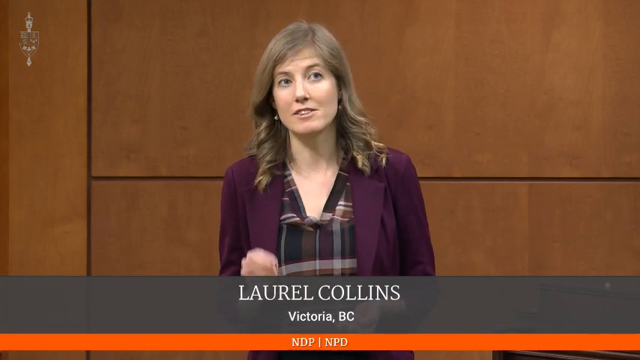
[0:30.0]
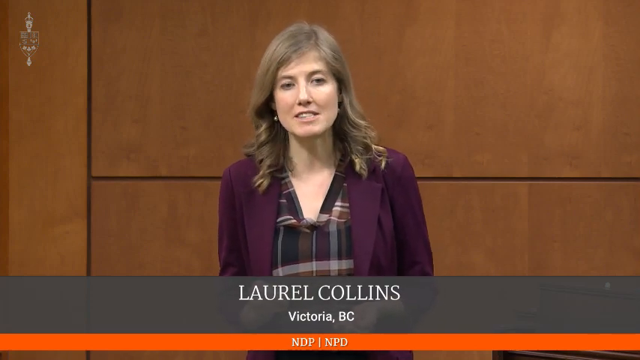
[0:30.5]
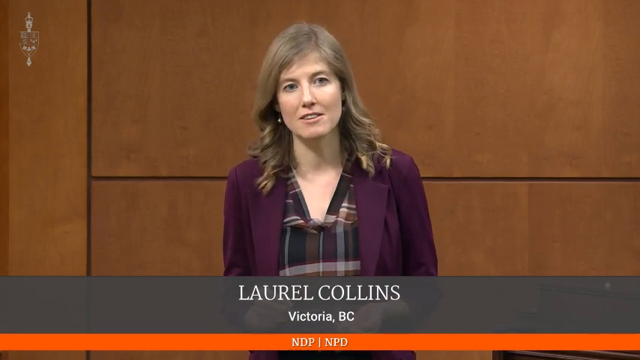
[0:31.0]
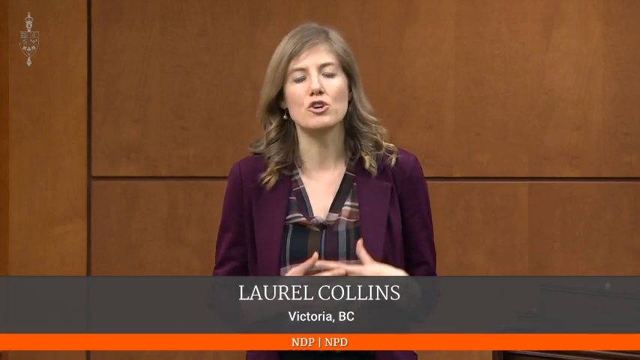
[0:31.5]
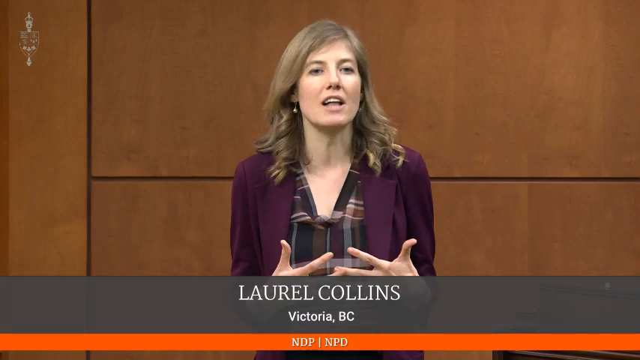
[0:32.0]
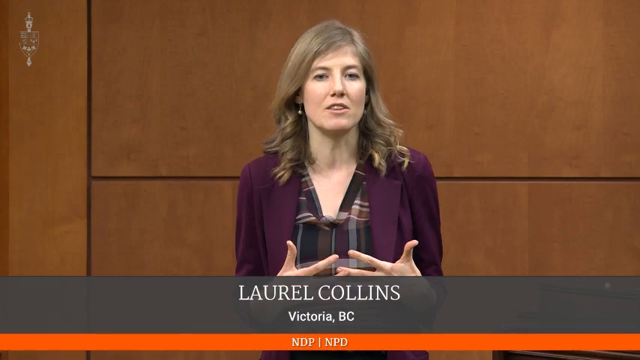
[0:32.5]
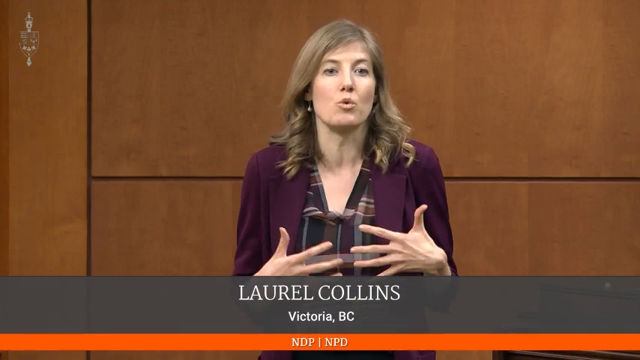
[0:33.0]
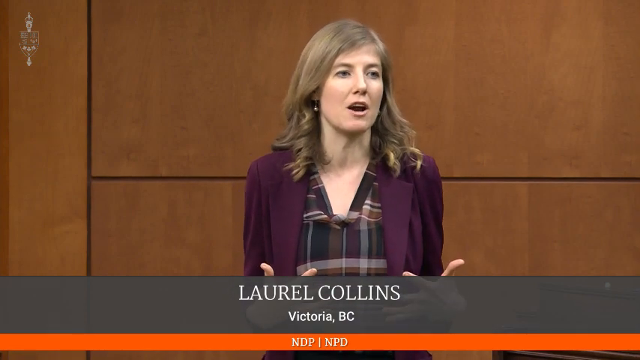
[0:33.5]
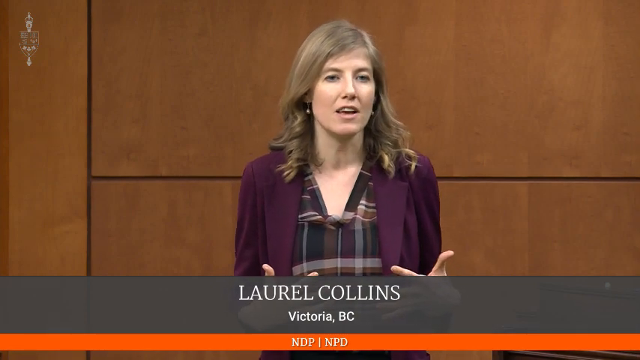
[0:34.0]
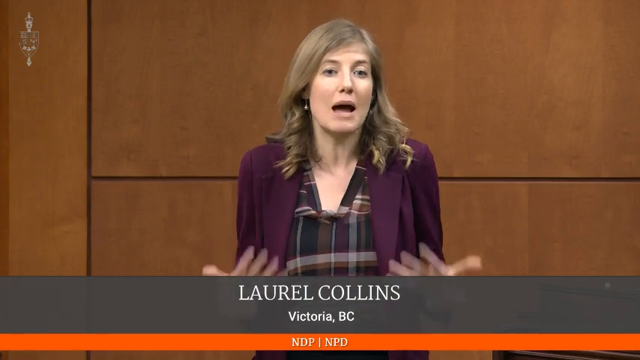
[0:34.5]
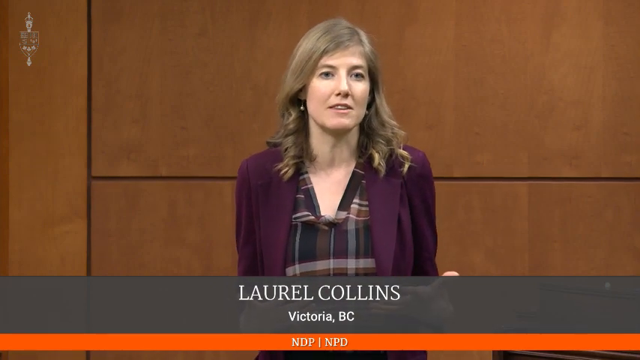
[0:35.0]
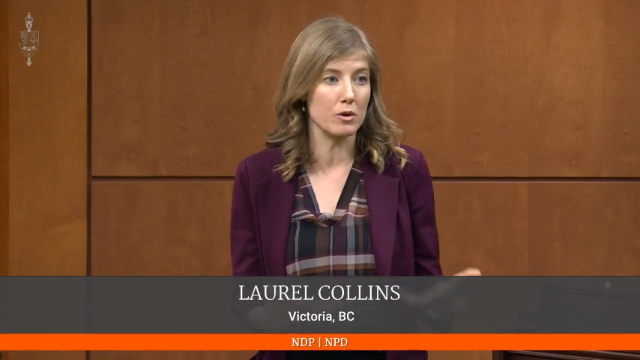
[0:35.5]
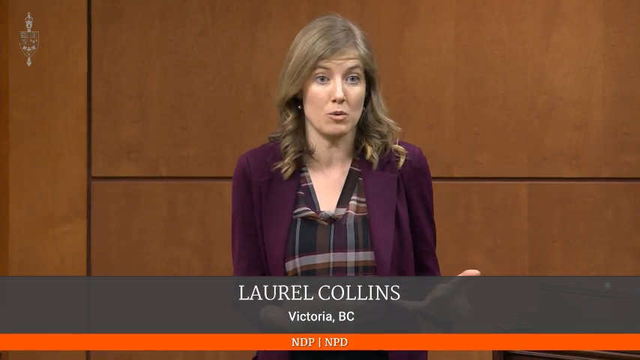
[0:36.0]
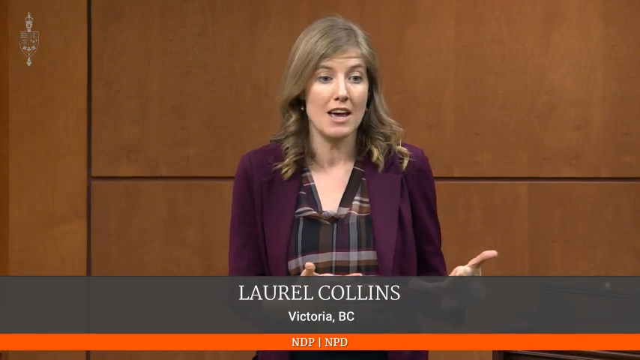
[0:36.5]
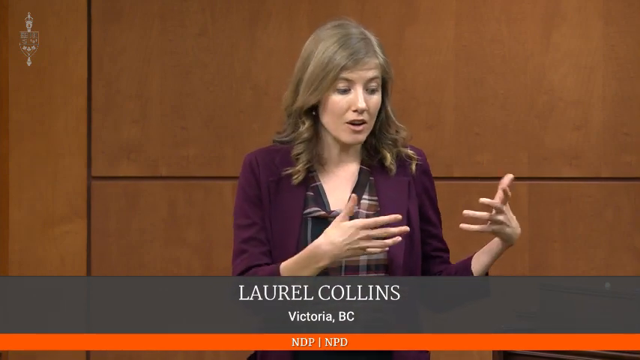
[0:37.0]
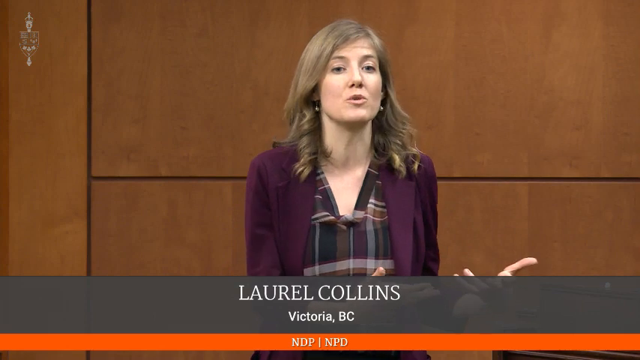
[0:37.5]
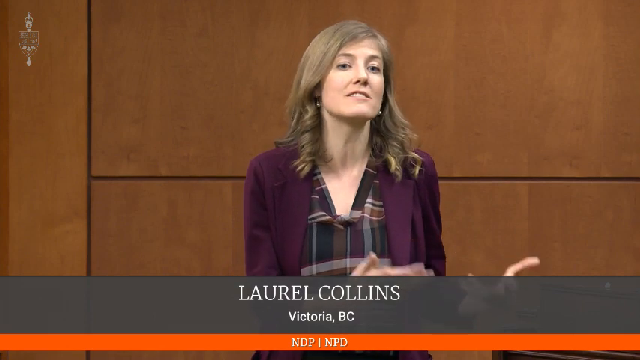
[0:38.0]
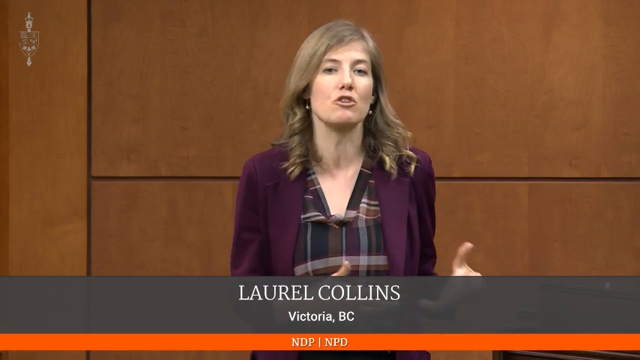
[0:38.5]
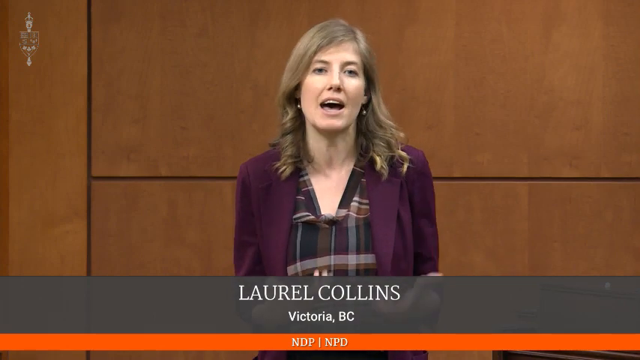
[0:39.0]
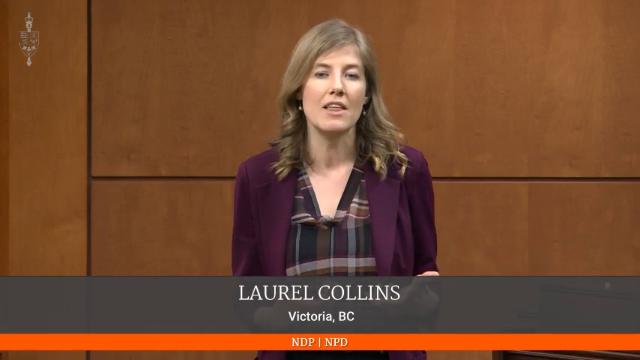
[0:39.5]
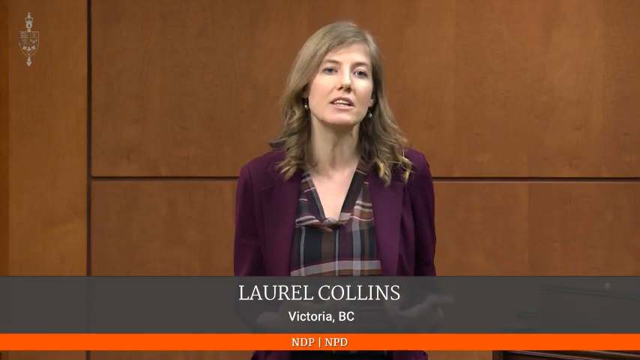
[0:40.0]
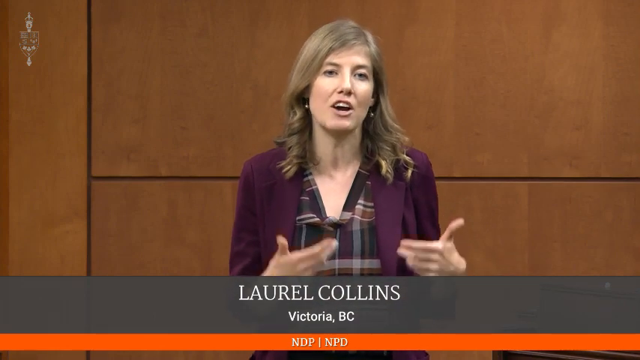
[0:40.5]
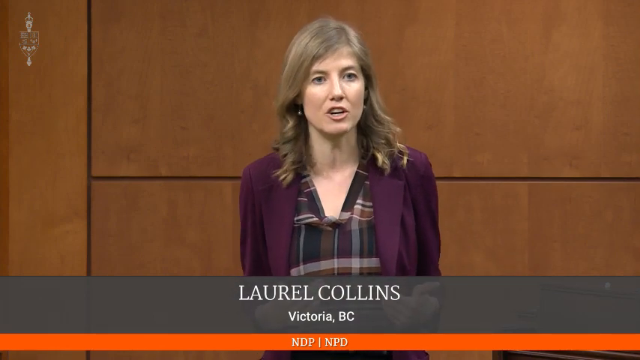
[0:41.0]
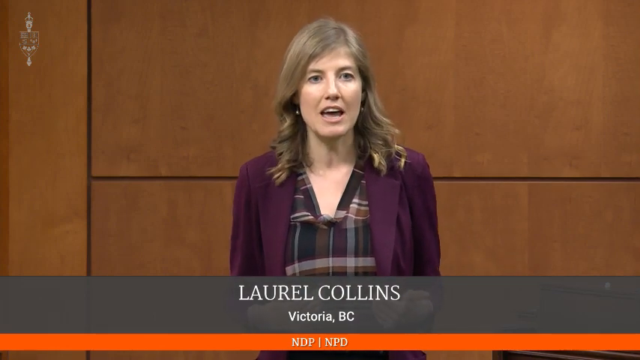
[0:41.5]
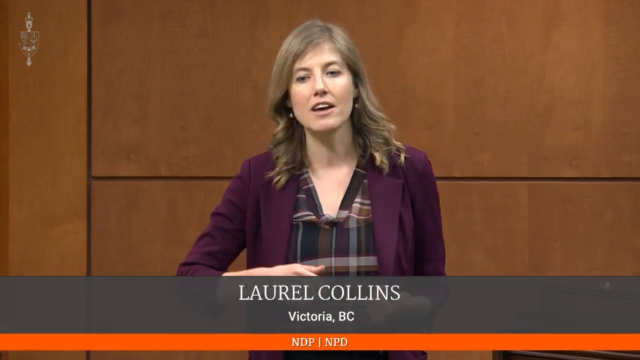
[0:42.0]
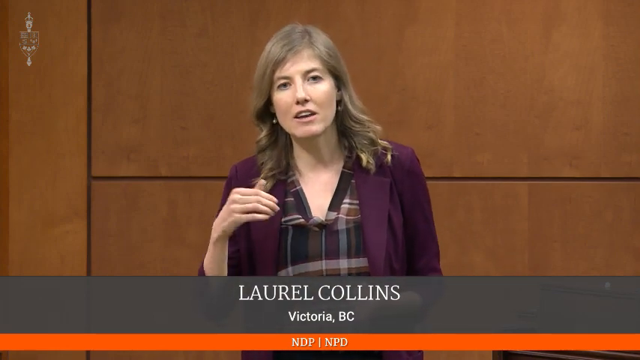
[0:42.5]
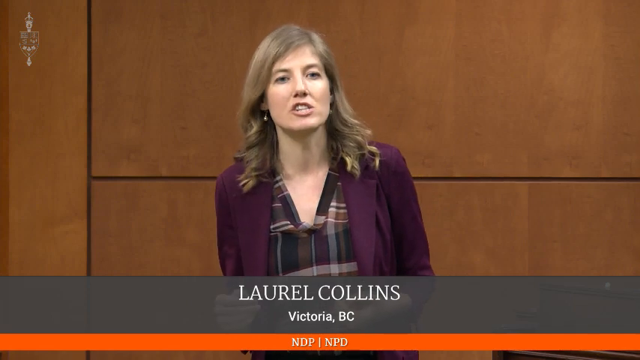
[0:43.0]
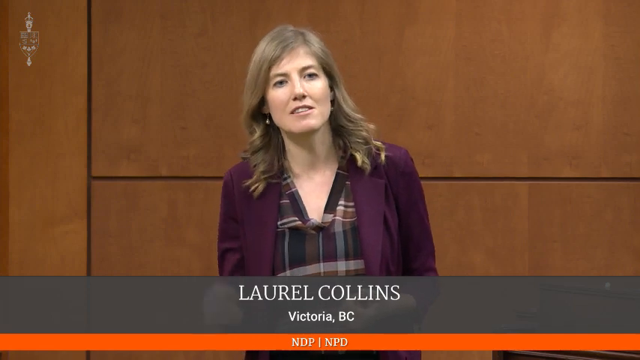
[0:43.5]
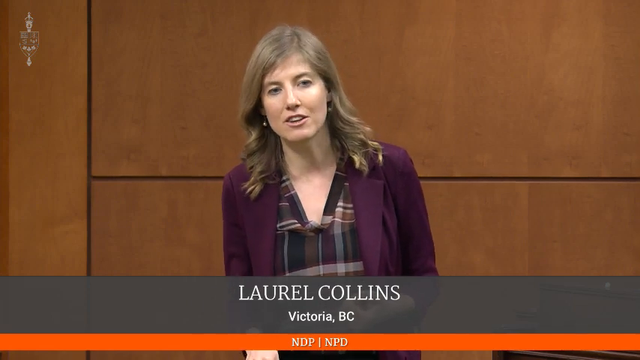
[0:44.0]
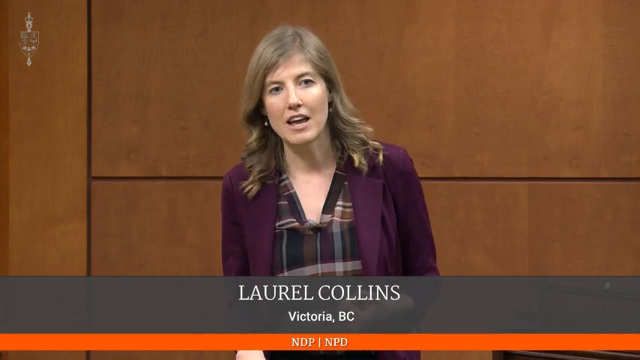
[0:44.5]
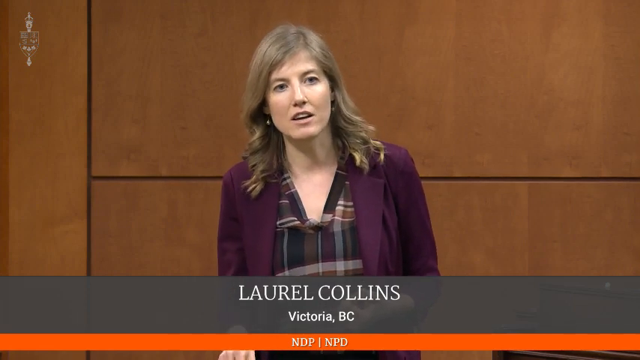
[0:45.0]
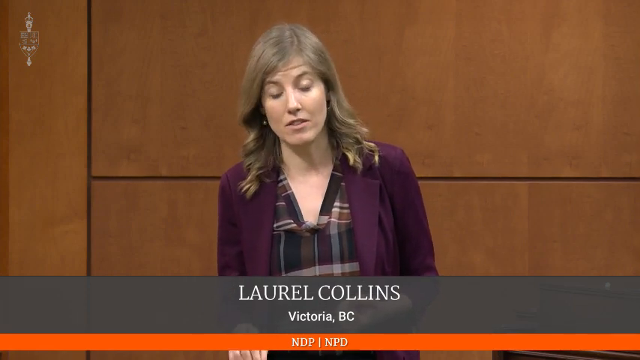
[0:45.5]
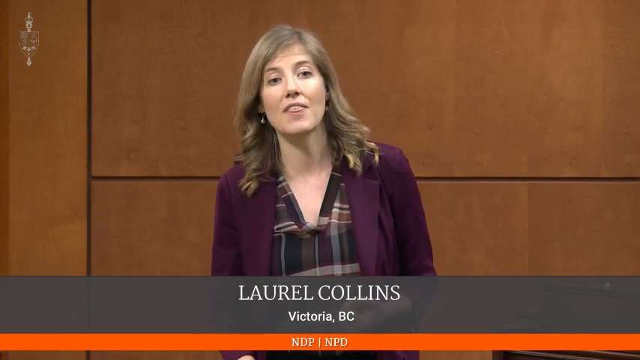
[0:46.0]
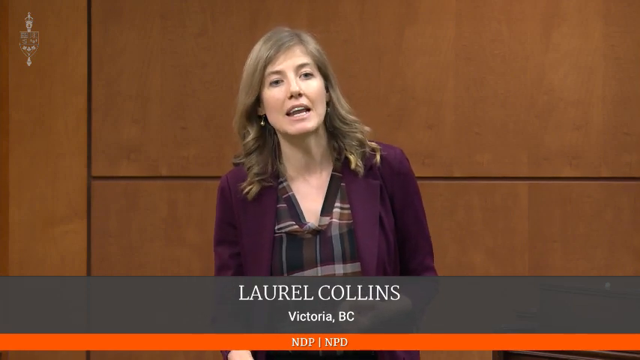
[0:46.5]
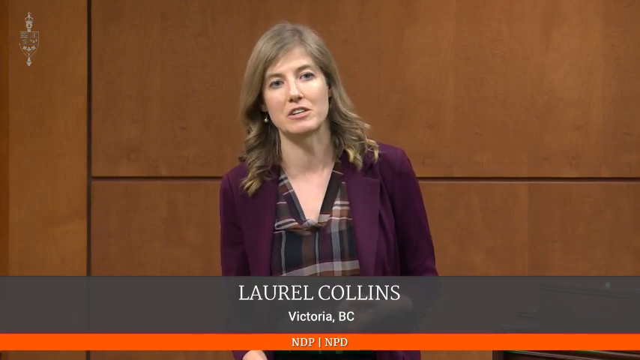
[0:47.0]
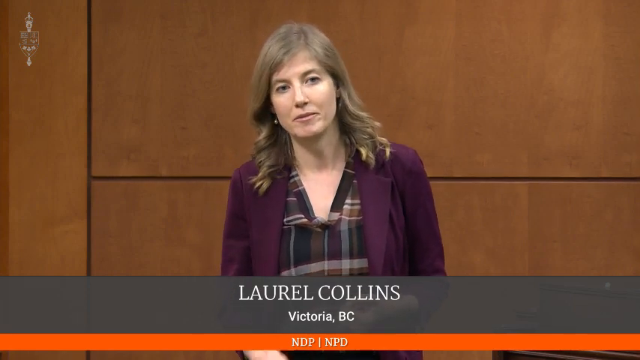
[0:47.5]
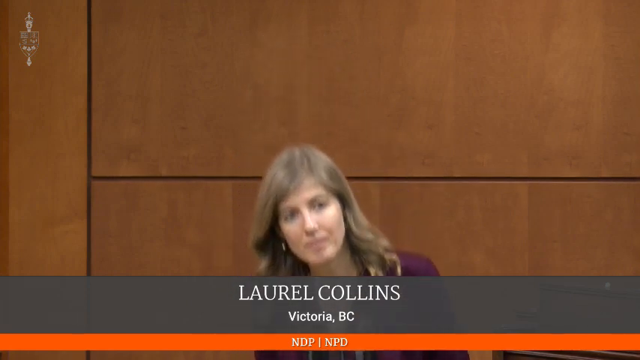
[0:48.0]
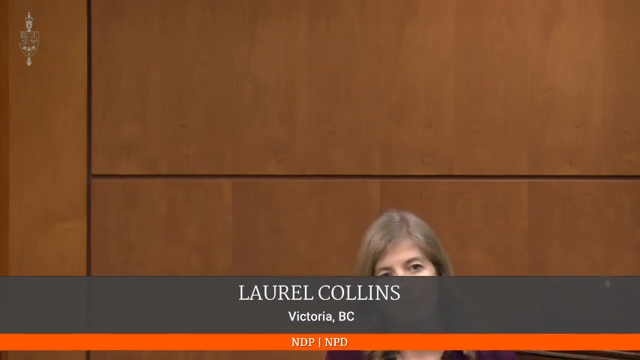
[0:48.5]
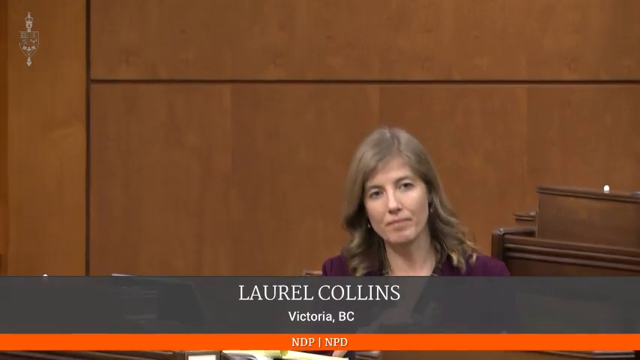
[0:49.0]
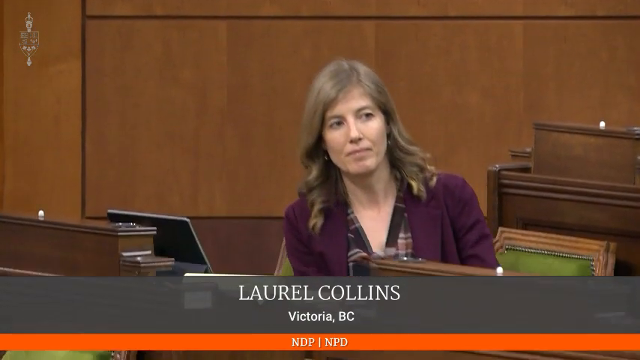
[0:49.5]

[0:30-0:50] A close-up shows a blonde Caucasian woman in a black, white and purple plaid shirt with a purple suit coat over it. She is talking and seems passionate about her topic, using body language and various hand motions. She is standing in front of a brown wall that seems to have different sections or to be made of very large tiles, with what looks like grout or indentations between the brown tiles. A blackish-gray banner at the bottom of the screen shows white text reading "Laurel Collins" and, below it in smaller white text, "Victoria B.C.", with the V, B and C capitalized. When she is done talking, the woman sits down at a brown desk with a green upholstered chair. An open laptop and a yellow legal pad are in front of her. She looks like she is looking at somebody who could be seated to her left, and she leans forward as she sits down.